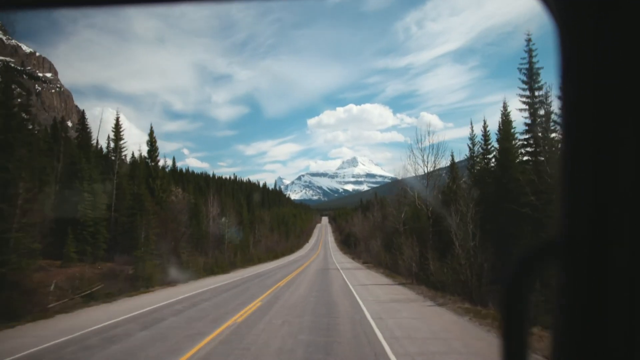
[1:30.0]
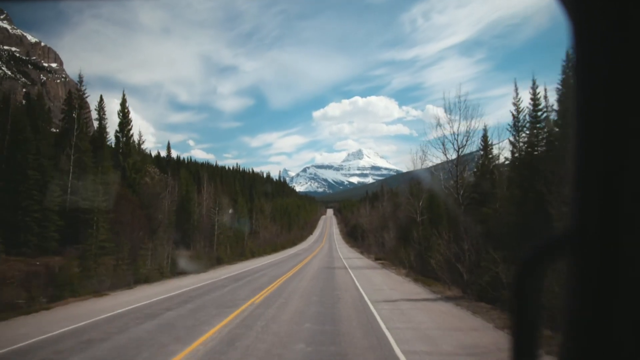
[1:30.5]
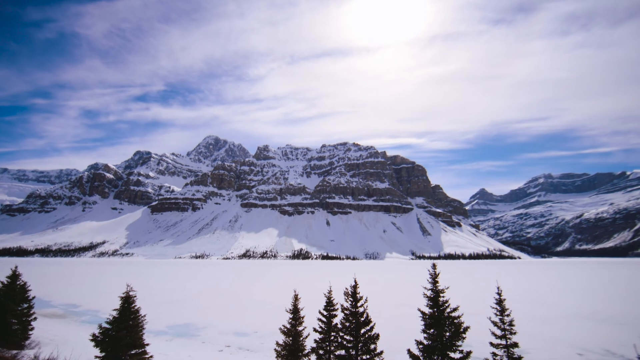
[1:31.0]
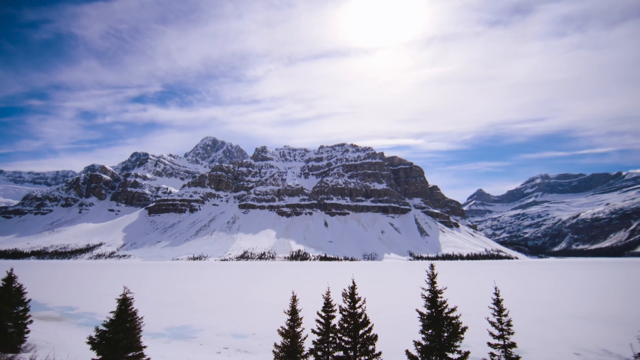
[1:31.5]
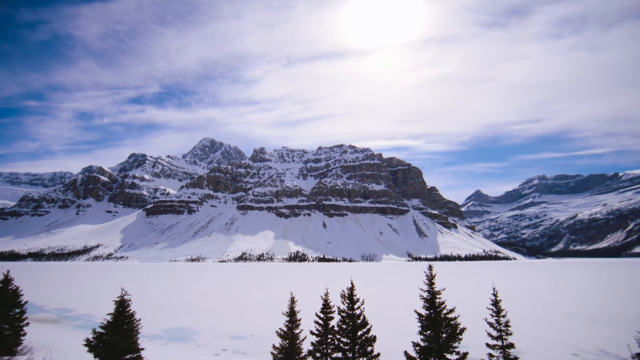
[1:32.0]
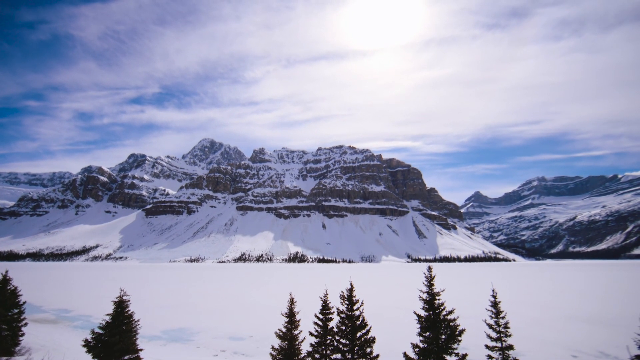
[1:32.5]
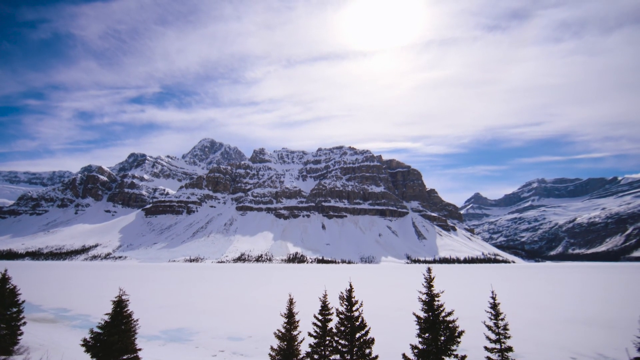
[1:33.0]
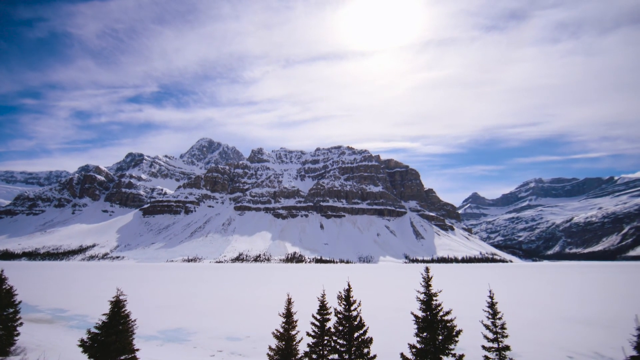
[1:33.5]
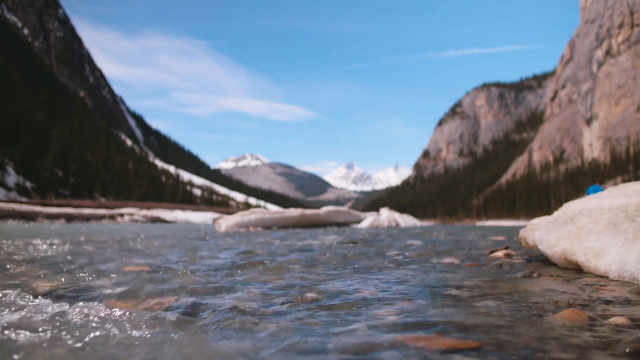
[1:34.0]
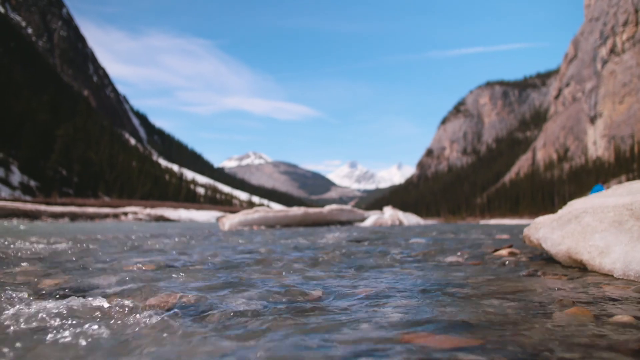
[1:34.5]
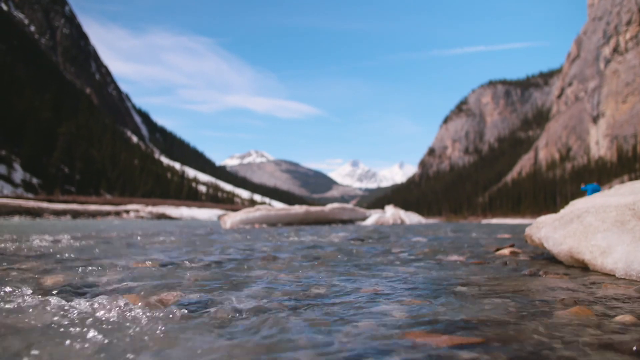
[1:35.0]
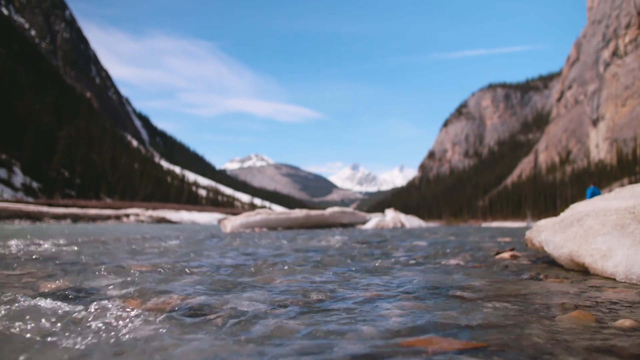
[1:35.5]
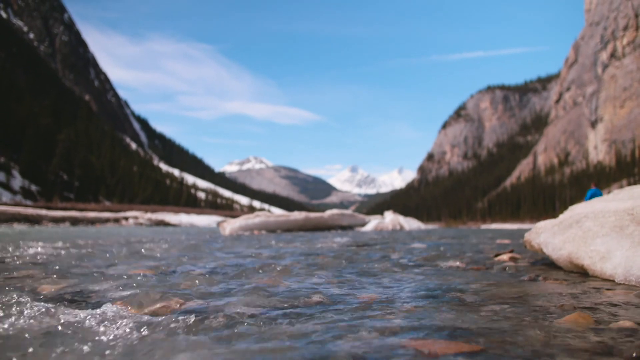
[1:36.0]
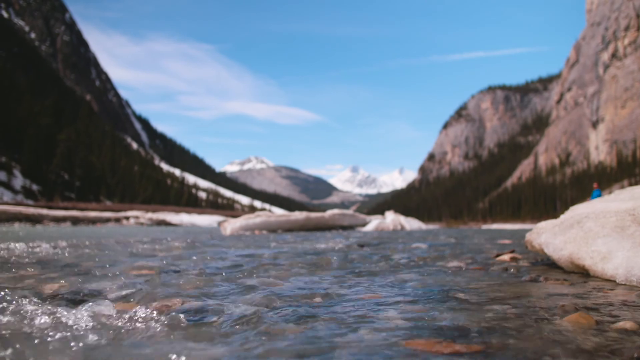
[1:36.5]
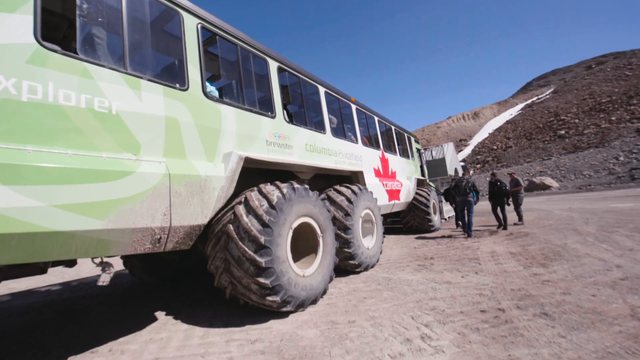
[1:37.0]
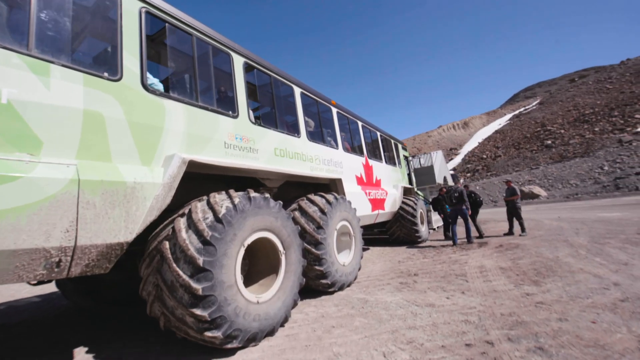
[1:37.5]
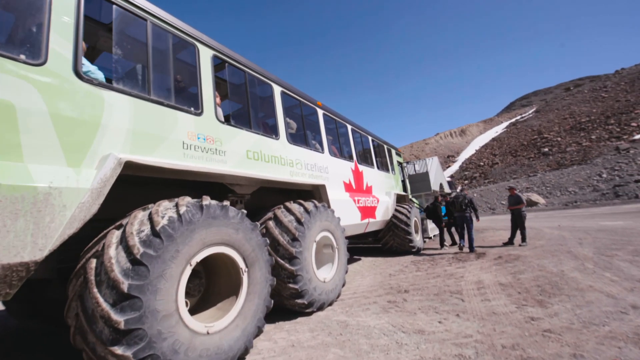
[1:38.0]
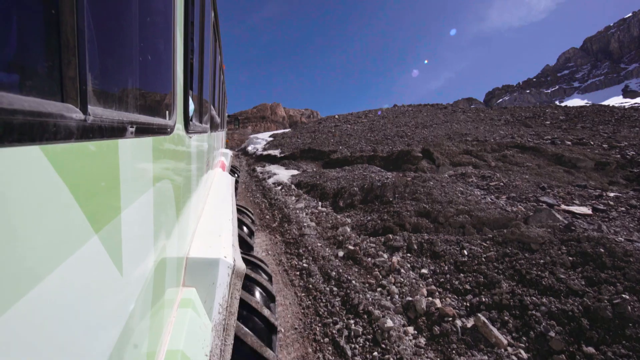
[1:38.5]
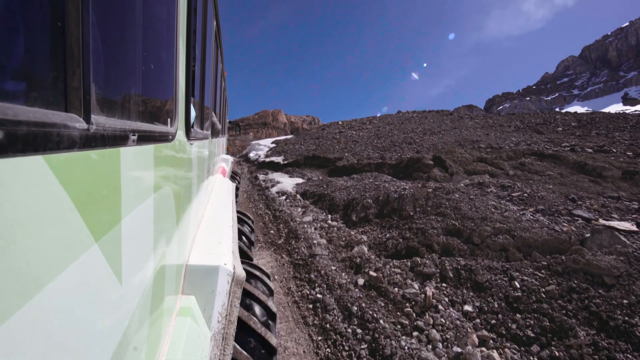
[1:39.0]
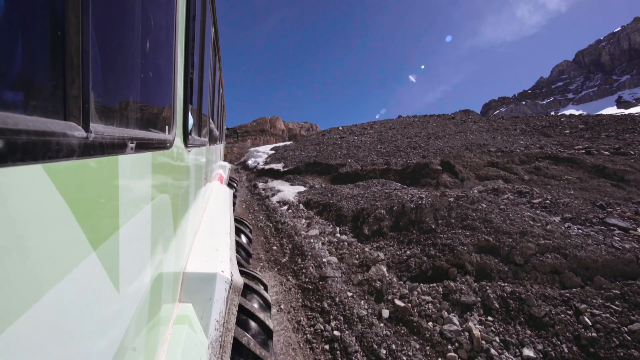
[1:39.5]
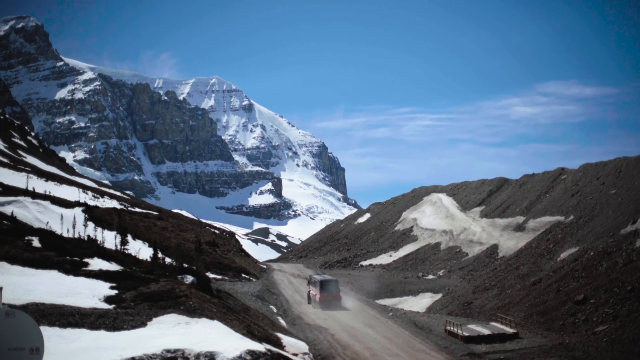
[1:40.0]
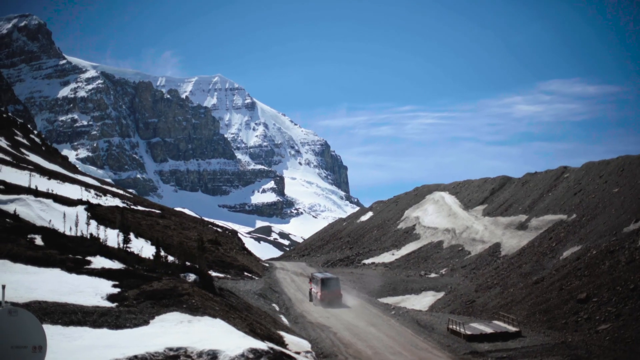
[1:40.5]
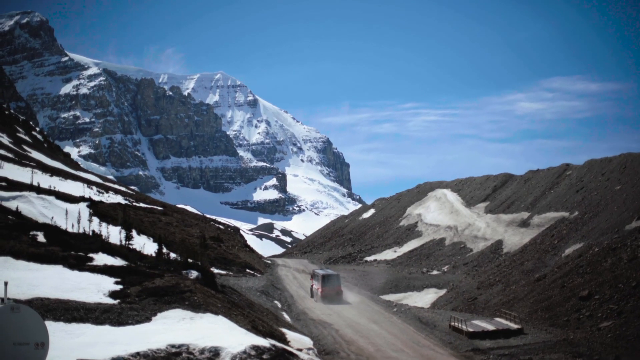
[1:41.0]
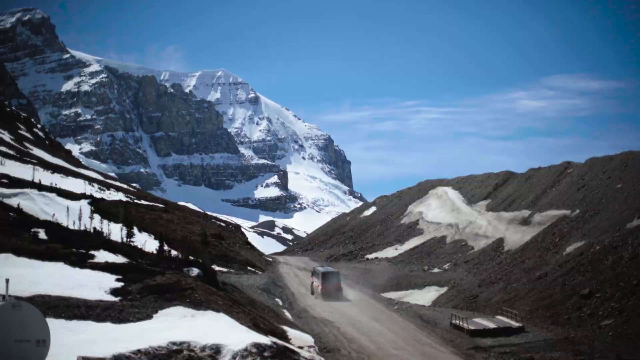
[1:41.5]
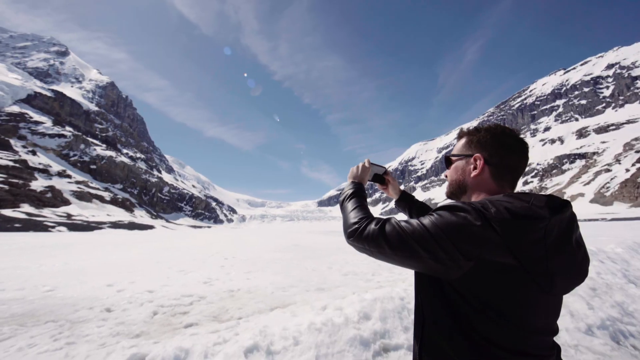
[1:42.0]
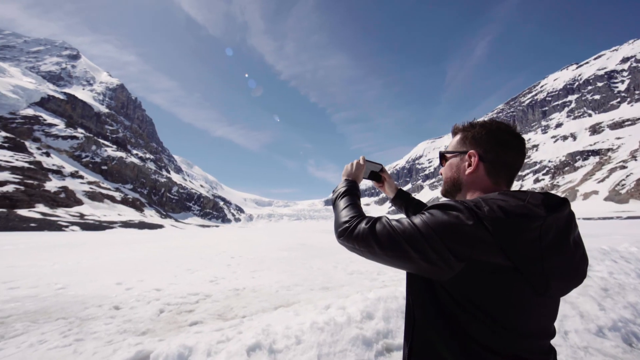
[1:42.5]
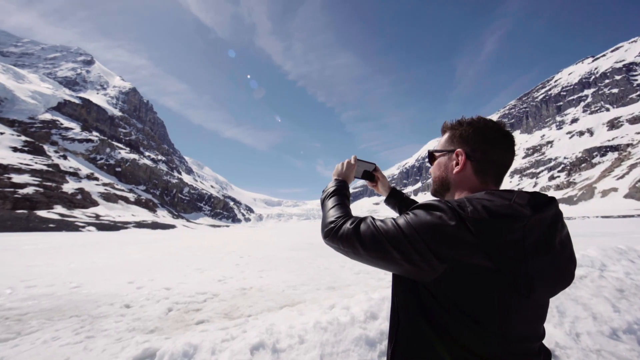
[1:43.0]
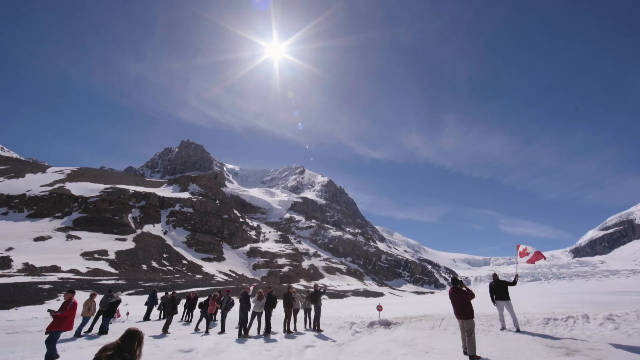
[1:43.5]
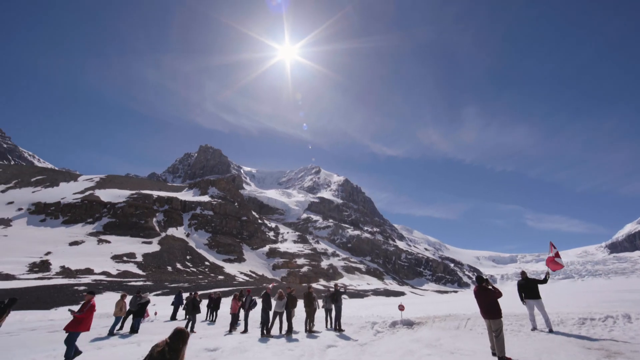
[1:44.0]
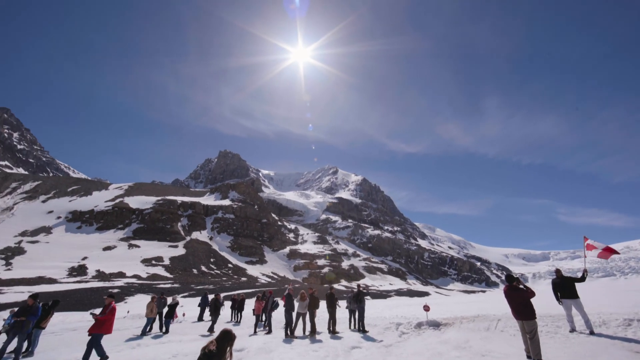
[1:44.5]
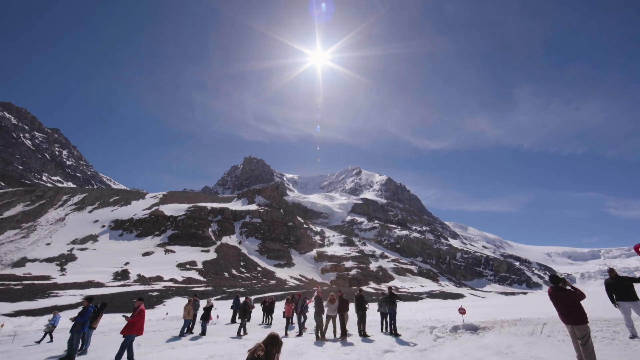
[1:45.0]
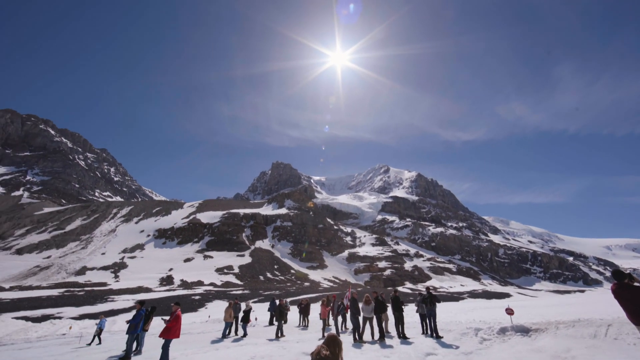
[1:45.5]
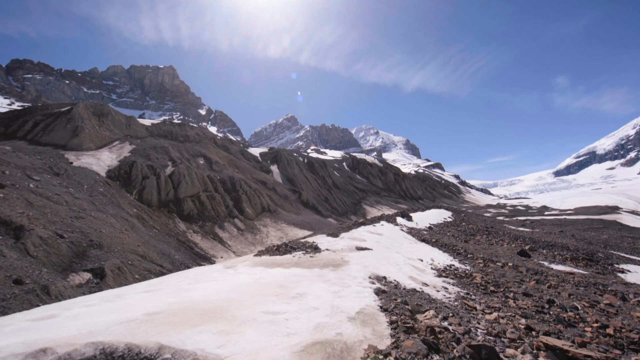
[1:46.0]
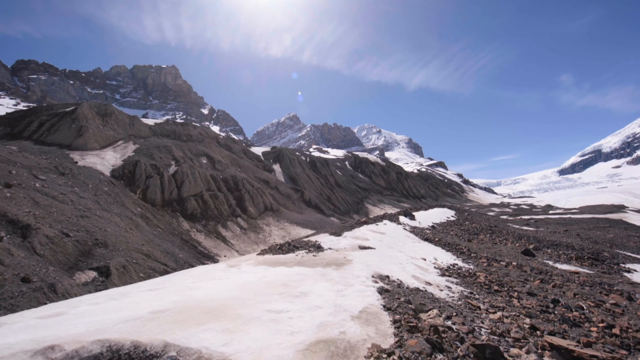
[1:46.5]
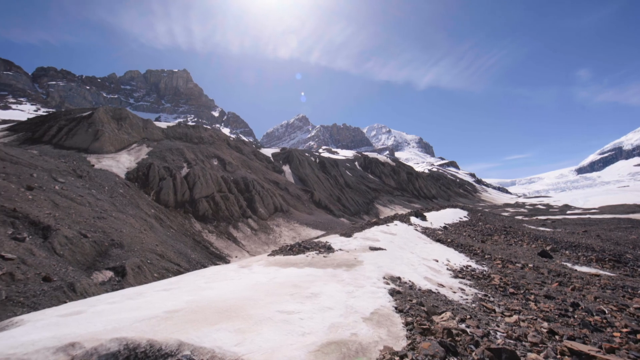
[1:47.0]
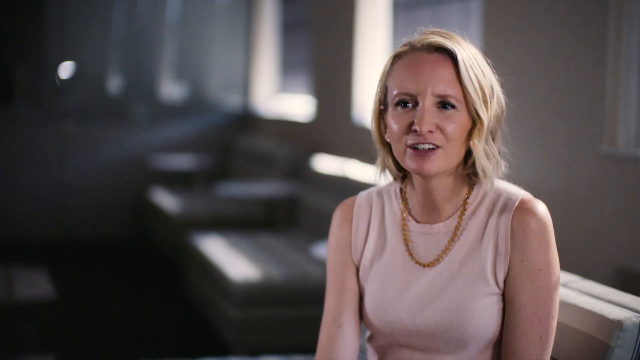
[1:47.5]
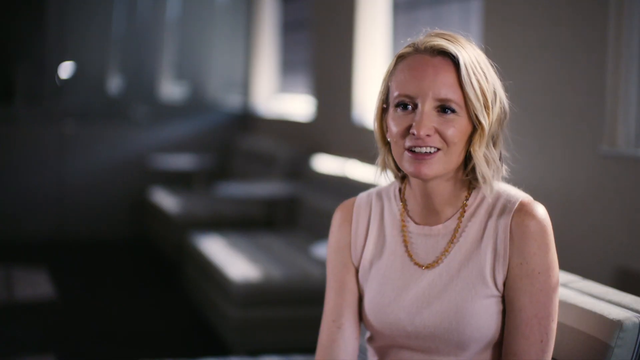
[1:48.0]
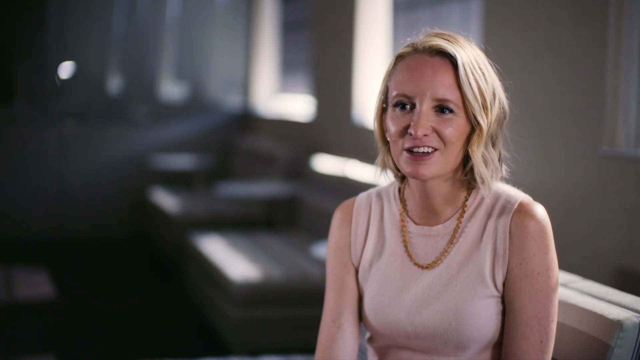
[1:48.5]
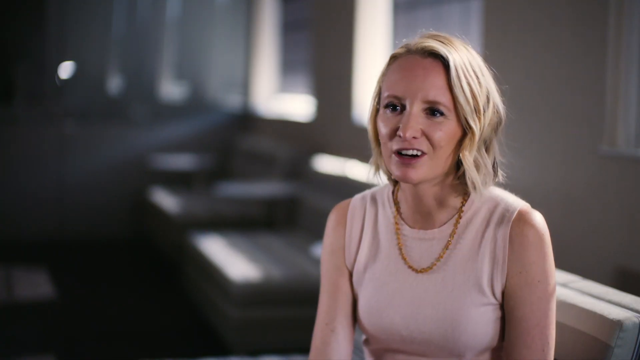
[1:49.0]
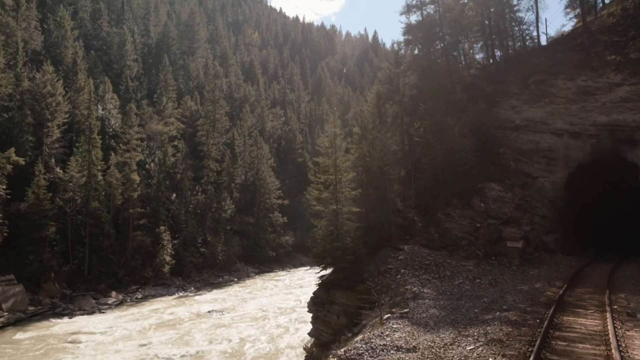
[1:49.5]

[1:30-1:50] Outdoors, the camera looks like it is going down a highway, with the highway coming toward it and trees around. A different shot shows snowy, mountainous terrain and the tops of trees; the camera is drifting and floating, almost like a still shot. Next is a babbling brook, filmed with the camera very low, like hovering above the water, showing the movement of the brook and the flat rocks surrounding the water. The scene then moves to a flat gravel landscape with very brown ground. On the left is a large vehicle with massive, thickly treaded tires, at least three visible on its right side, and a red Canadian maple leaf painted on its side. The doors are open and some men board the vehicle. The video then looks outside the vehicle.